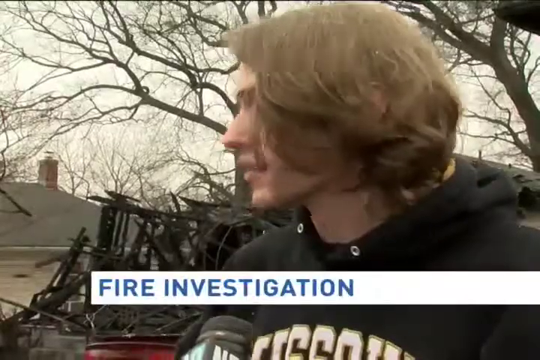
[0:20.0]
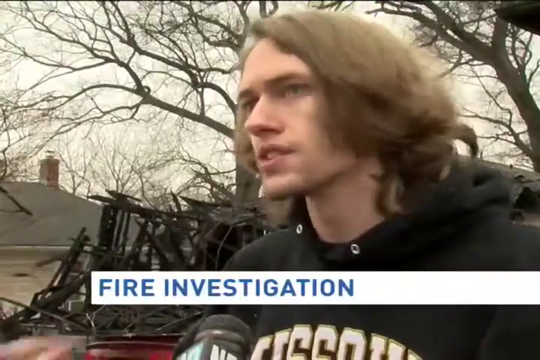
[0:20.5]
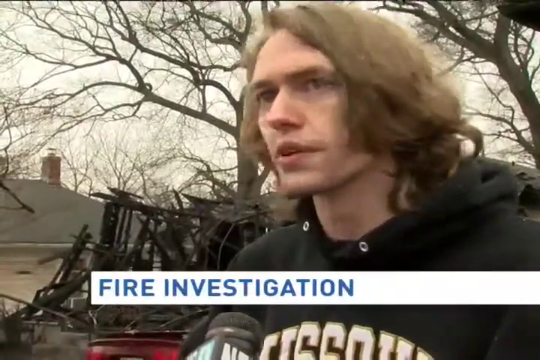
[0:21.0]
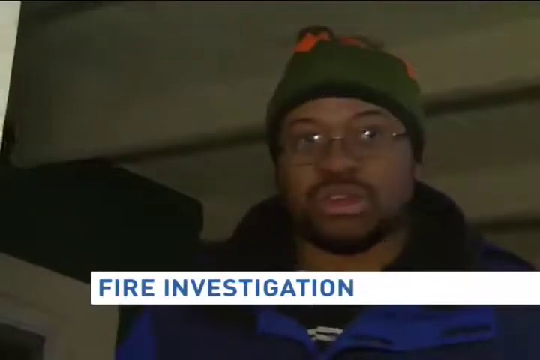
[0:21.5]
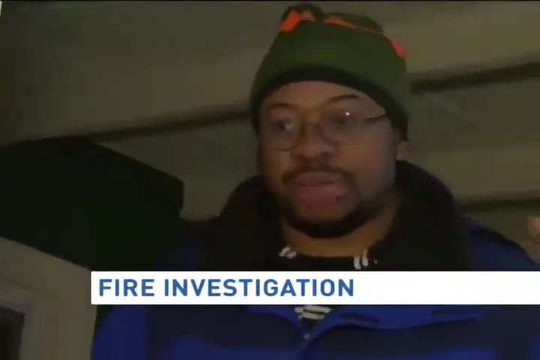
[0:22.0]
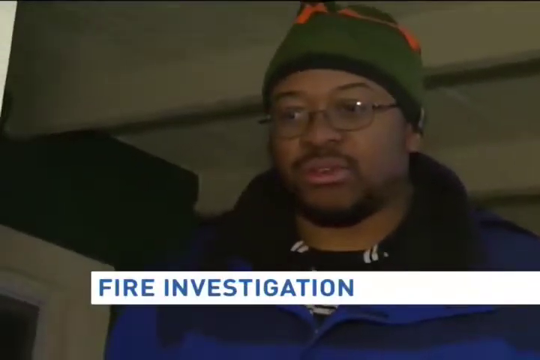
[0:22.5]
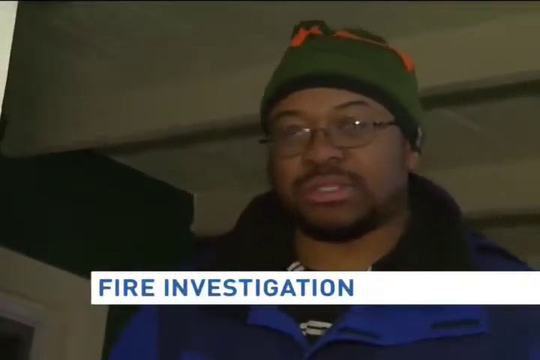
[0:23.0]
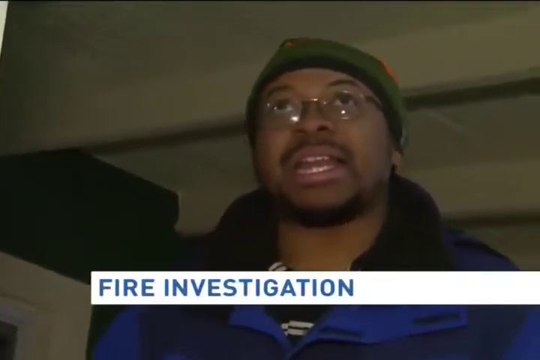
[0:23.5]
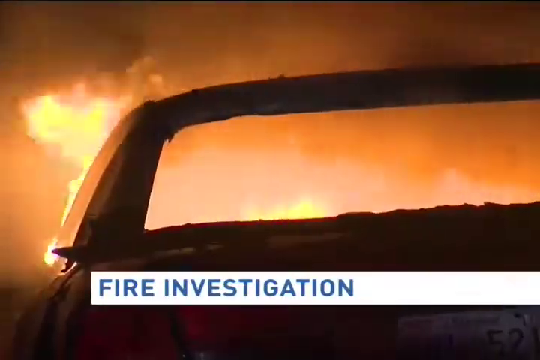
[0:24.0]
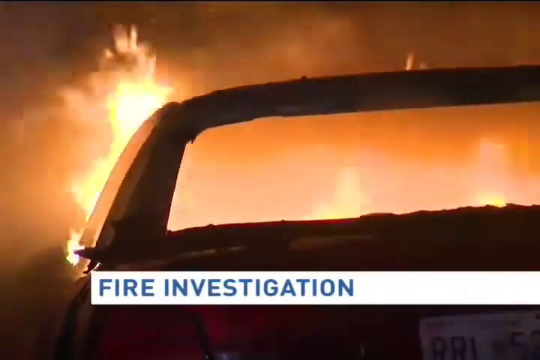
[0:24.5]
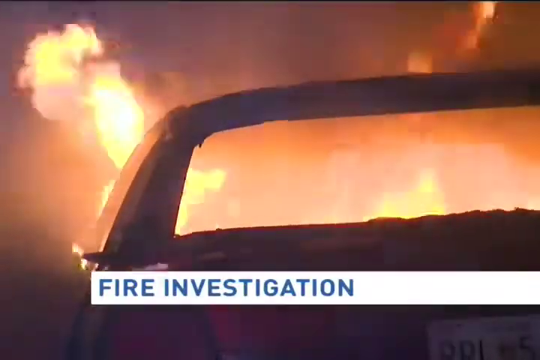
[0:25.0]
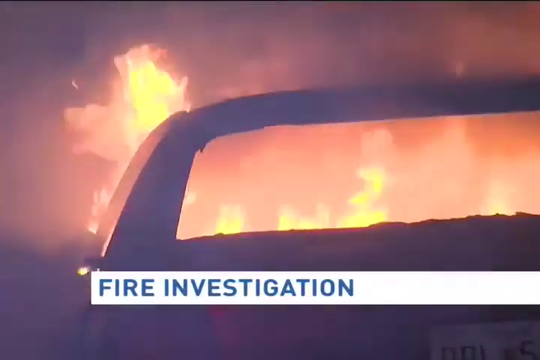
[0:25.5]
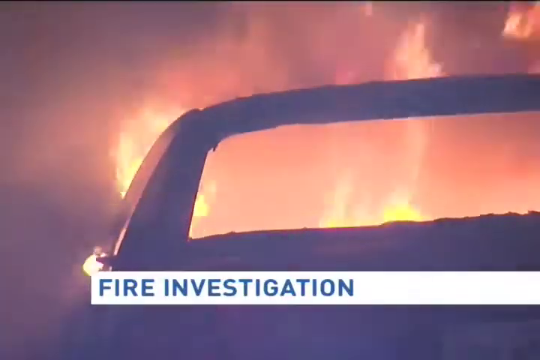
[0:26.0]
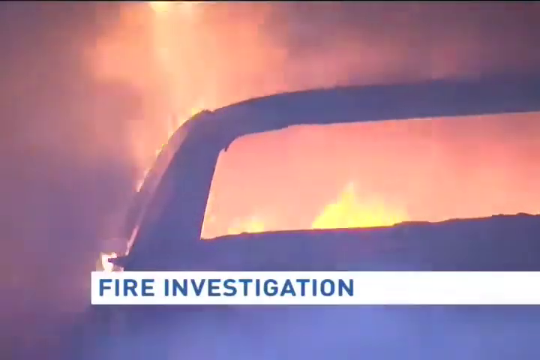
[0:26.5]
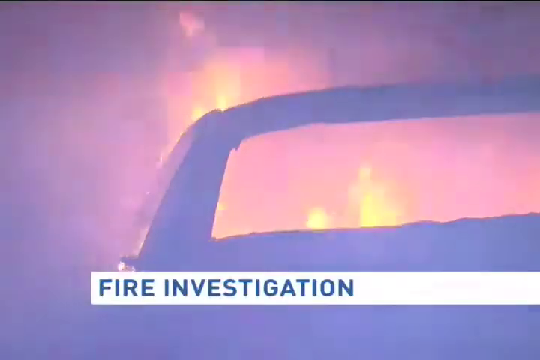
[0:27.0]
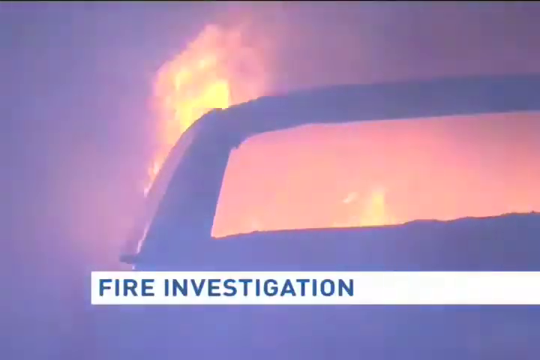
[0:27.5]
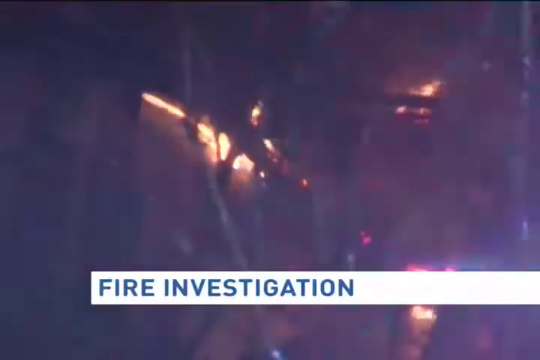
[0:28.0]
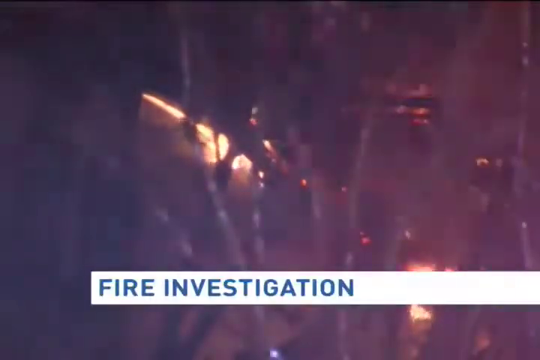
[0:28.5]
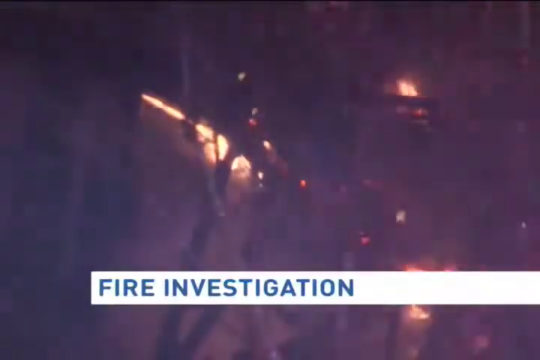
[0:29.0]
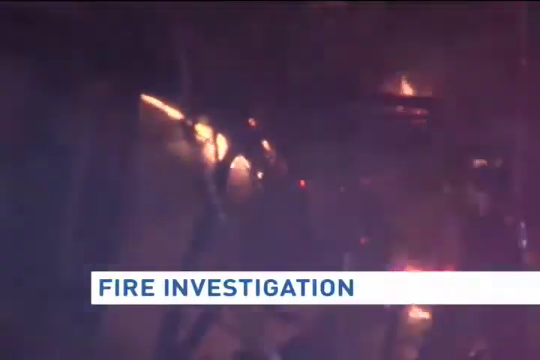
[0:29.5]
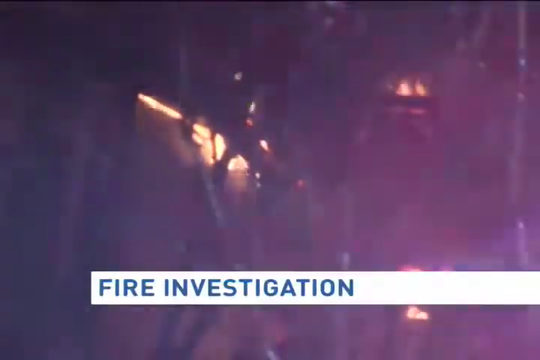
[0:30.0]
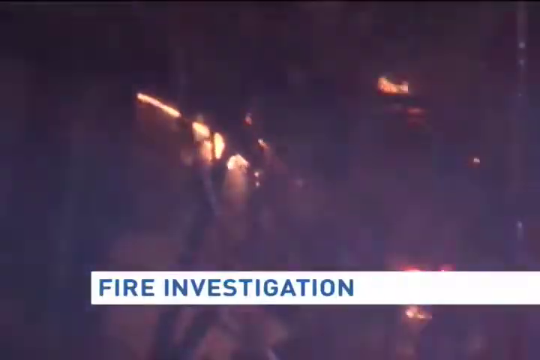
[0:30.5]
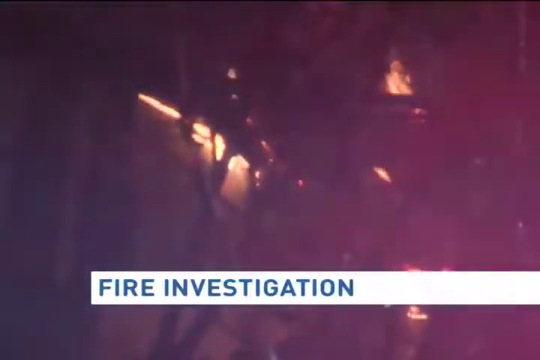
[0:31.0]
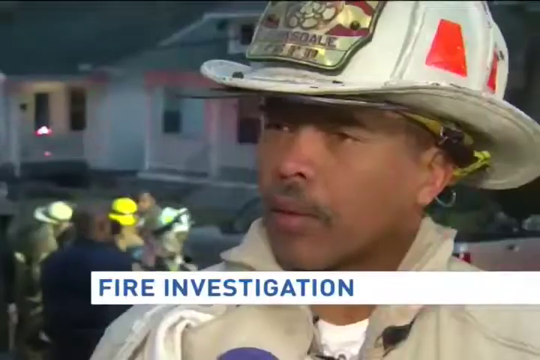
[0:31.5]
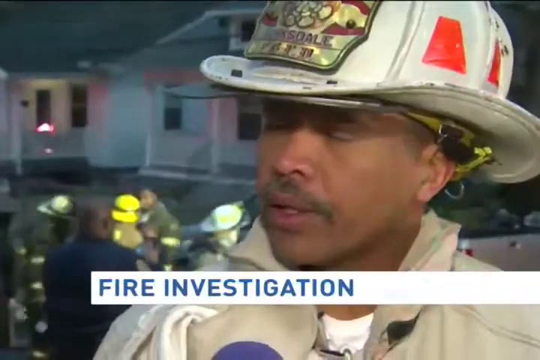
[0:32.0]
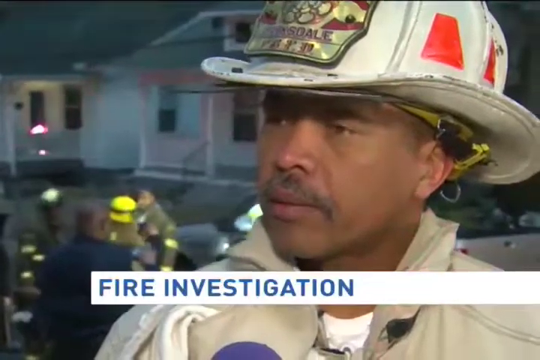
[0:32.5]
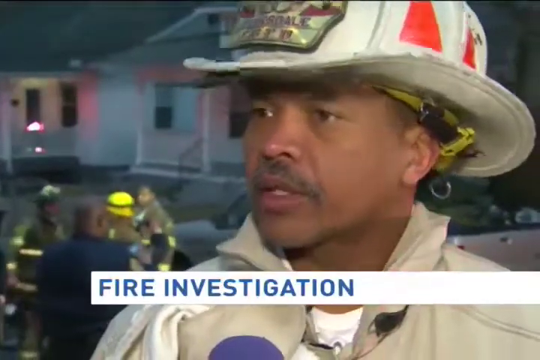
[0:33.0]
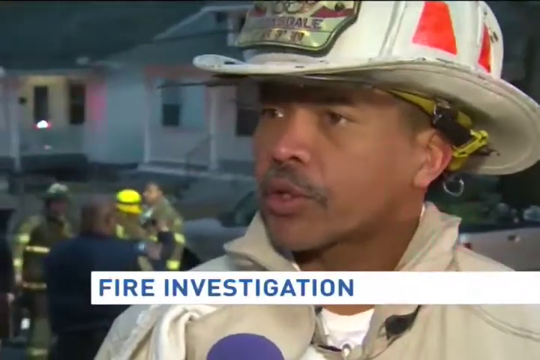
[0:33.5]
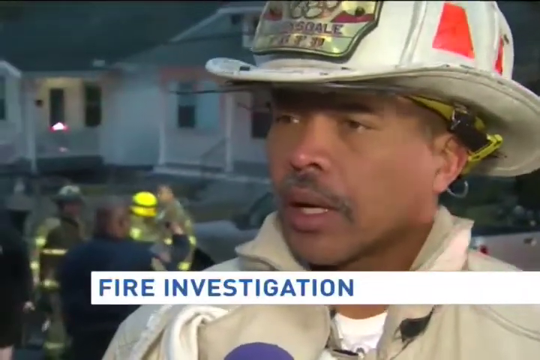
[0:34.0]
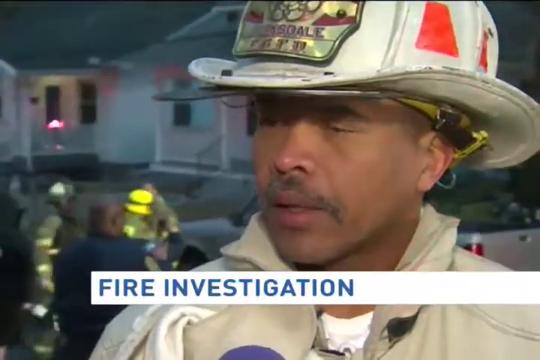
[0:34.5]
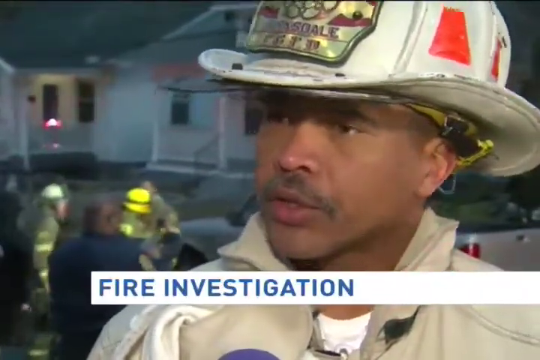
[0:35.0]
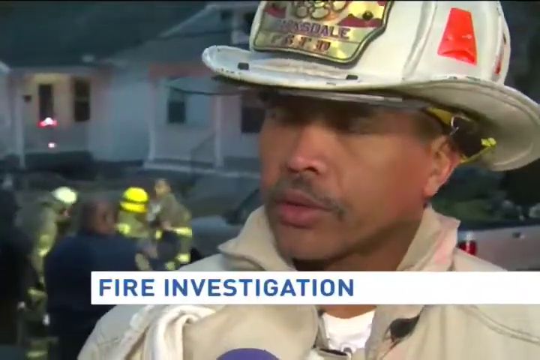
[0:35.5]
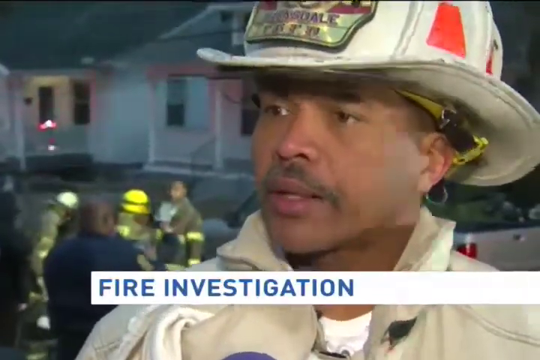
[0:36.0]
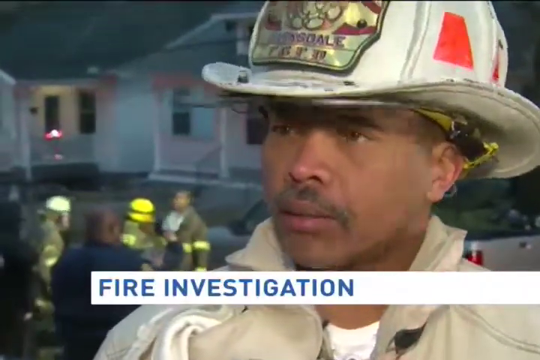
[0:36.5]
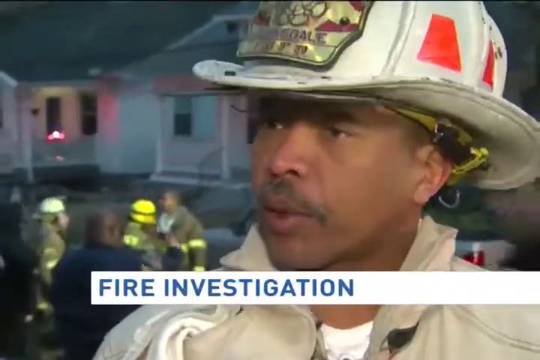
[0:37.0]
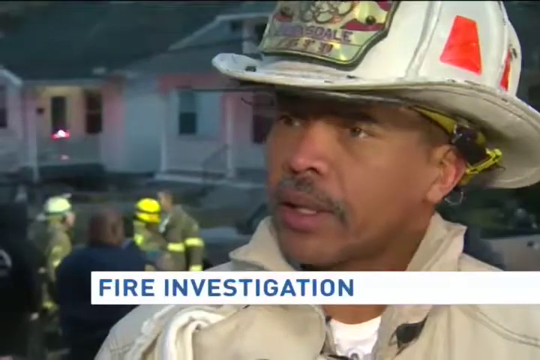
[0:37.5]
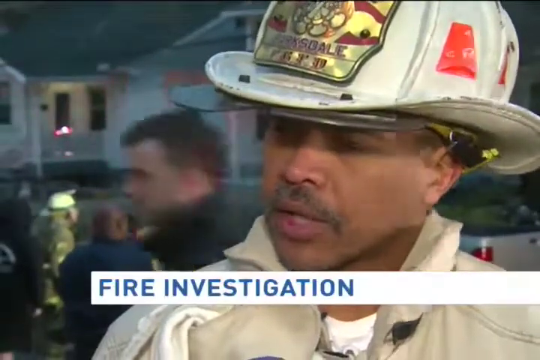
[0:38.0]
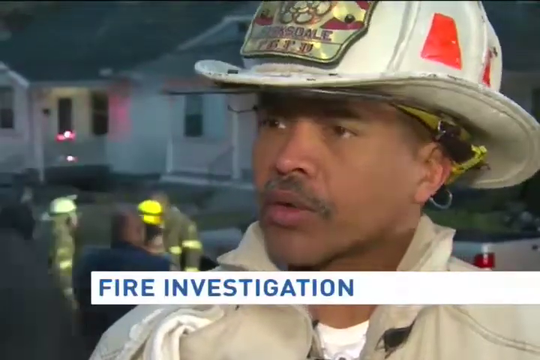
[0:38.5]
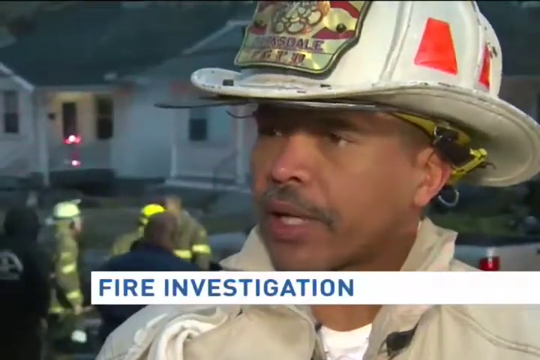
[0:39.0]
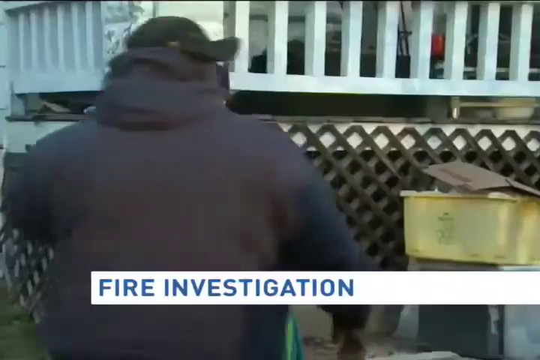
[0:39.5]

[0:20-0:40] Against a black background there are trees and a house, with "fire investigation" at the bottom of the screen. It cuts to another person being interviewed, wearing a beanie and glasses and with a beard; the shot appears to be at night, and "fire investigation" is still at the bottom of the screen. Another shot shows a car on fire with large flames and smoke in the area, followed by multiple angles of a house on fire. Then a firefighter with a mustache, wearing a white firefighter's hat and a white jumpsuit, is interviewed as he talks to the camera, with a house and multiple firefighters in the background.